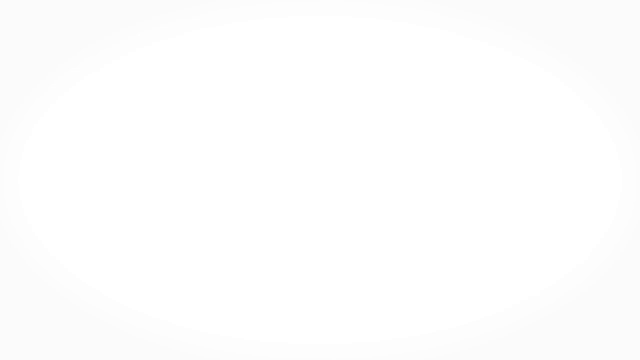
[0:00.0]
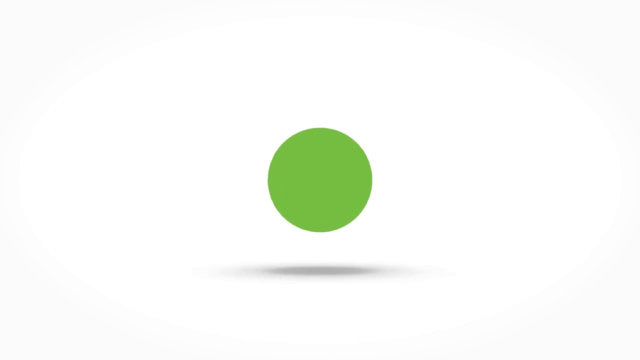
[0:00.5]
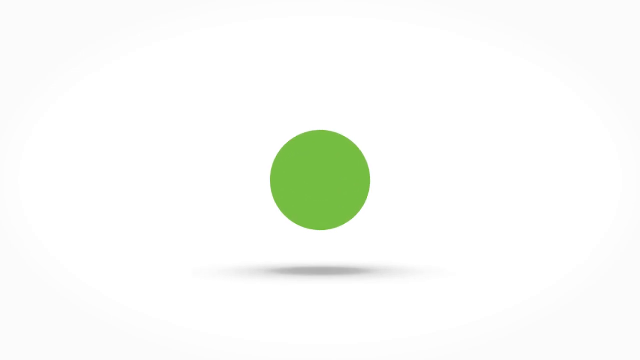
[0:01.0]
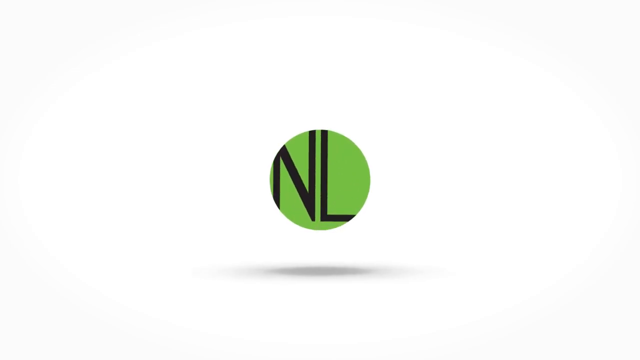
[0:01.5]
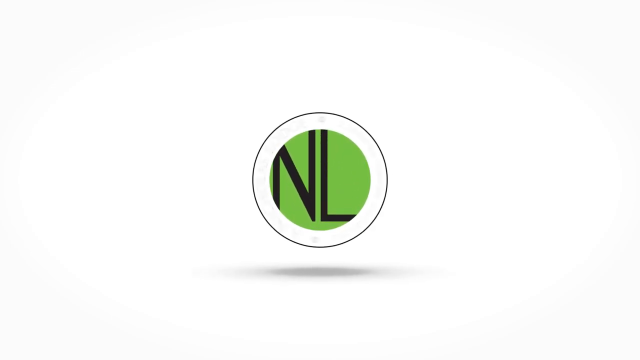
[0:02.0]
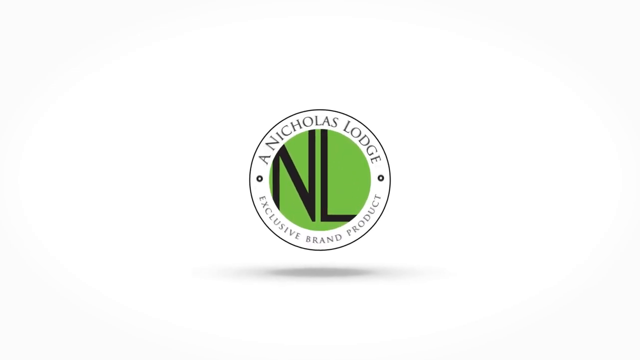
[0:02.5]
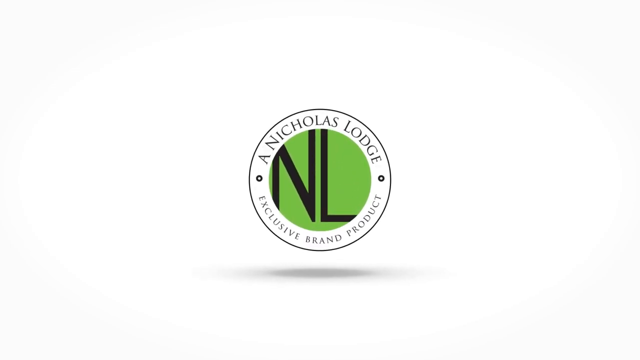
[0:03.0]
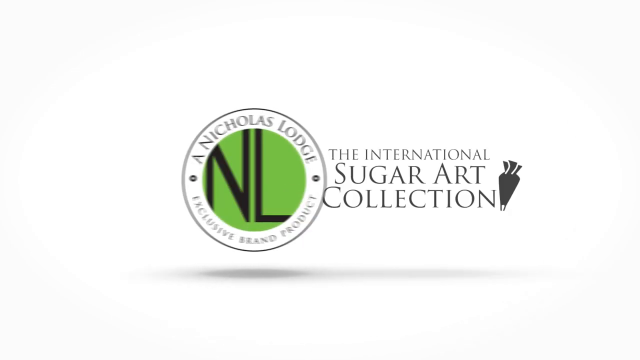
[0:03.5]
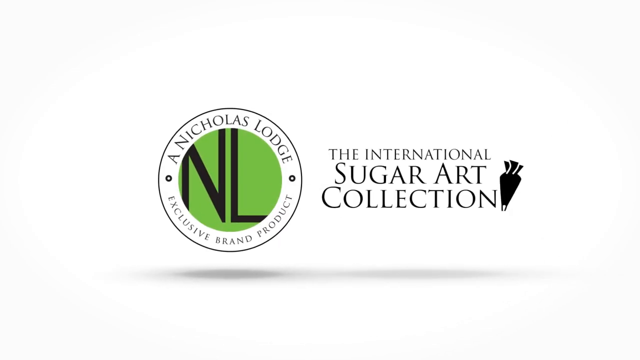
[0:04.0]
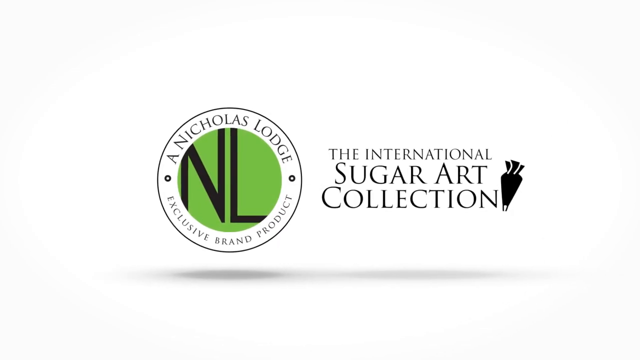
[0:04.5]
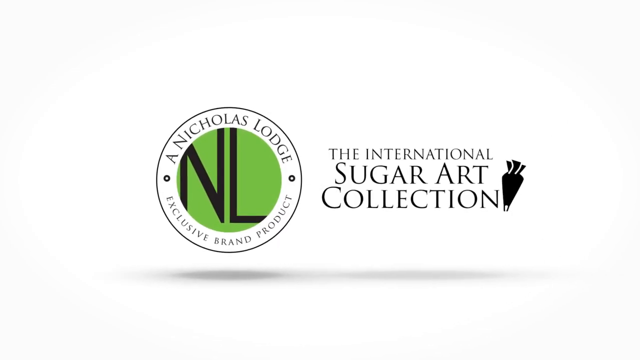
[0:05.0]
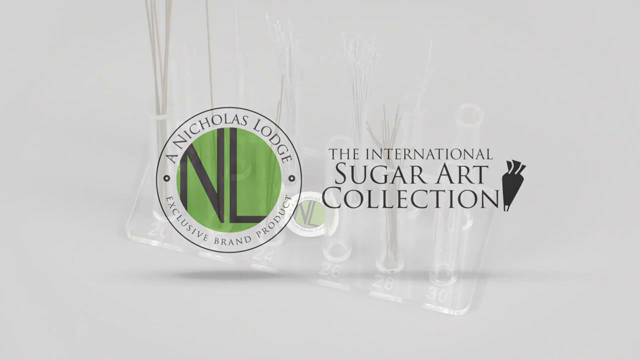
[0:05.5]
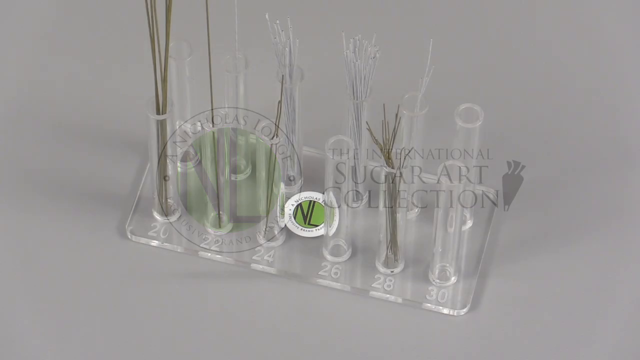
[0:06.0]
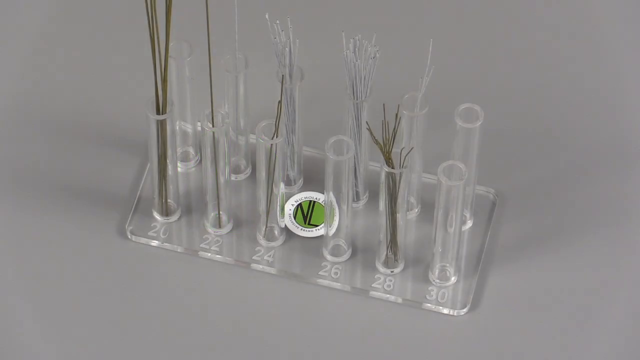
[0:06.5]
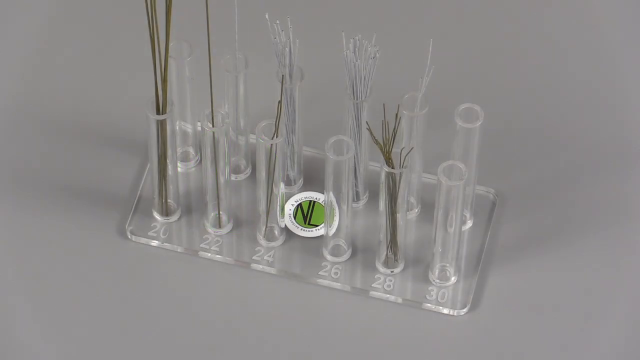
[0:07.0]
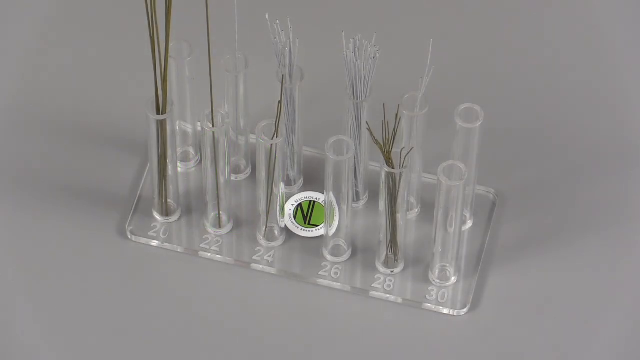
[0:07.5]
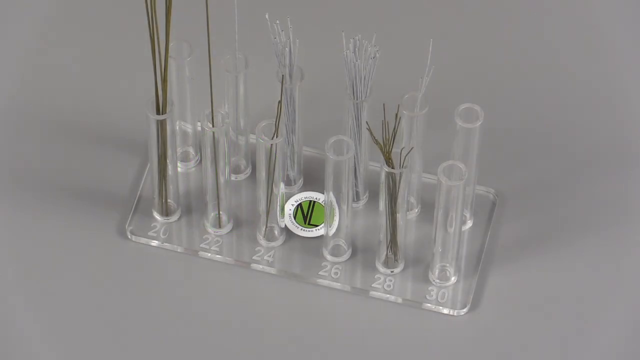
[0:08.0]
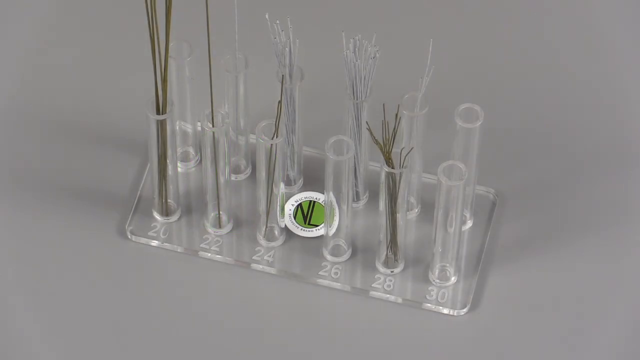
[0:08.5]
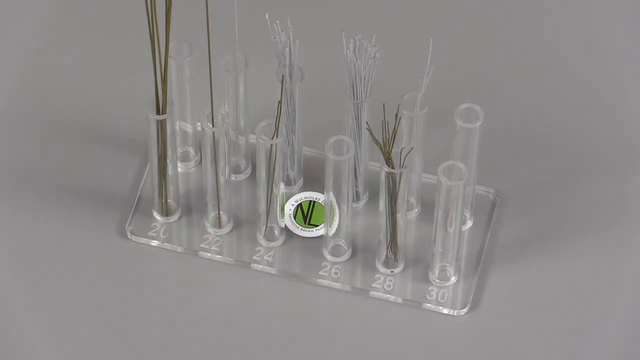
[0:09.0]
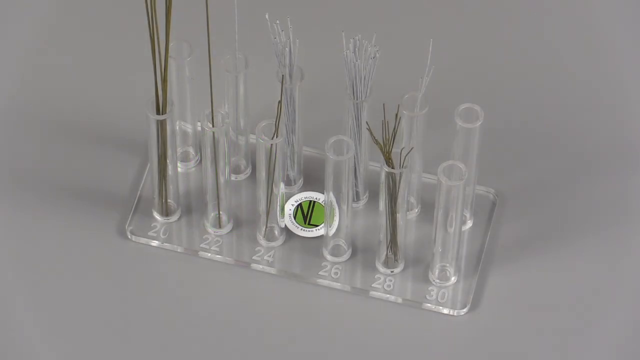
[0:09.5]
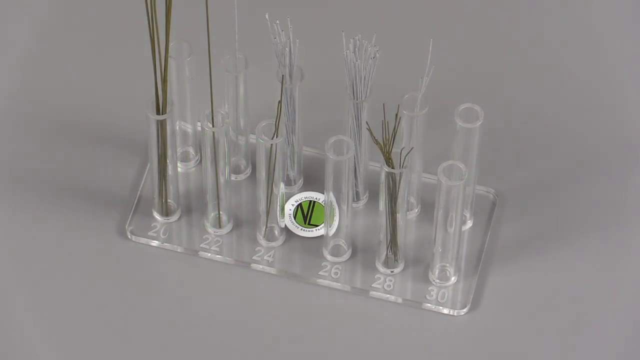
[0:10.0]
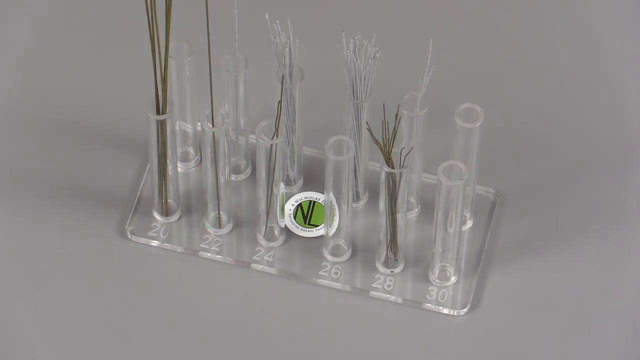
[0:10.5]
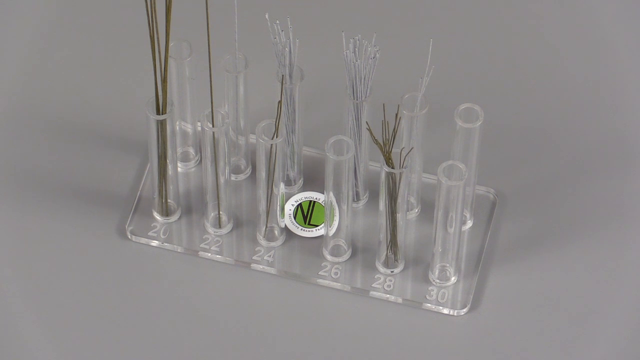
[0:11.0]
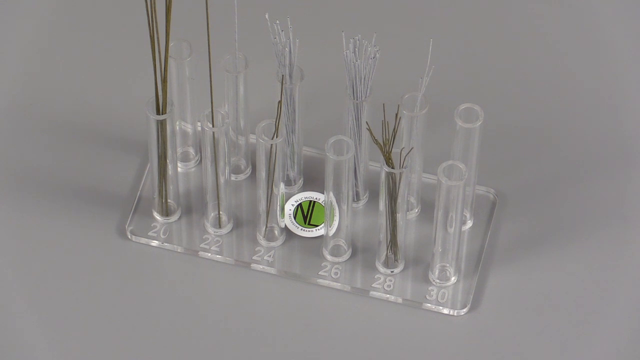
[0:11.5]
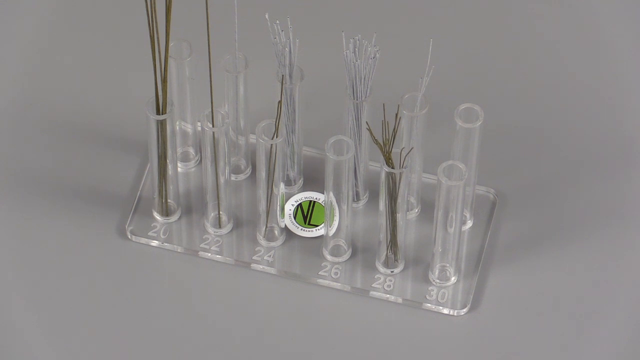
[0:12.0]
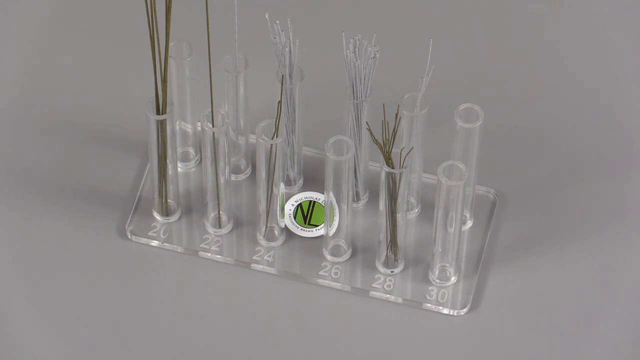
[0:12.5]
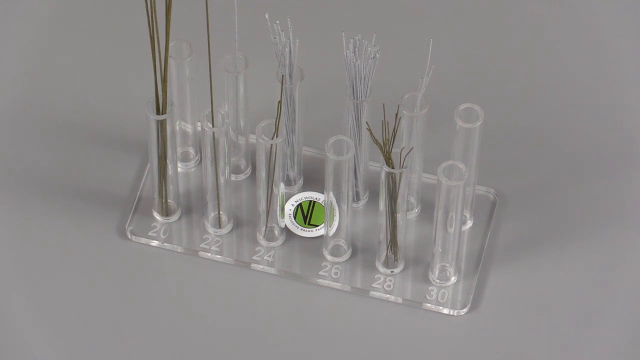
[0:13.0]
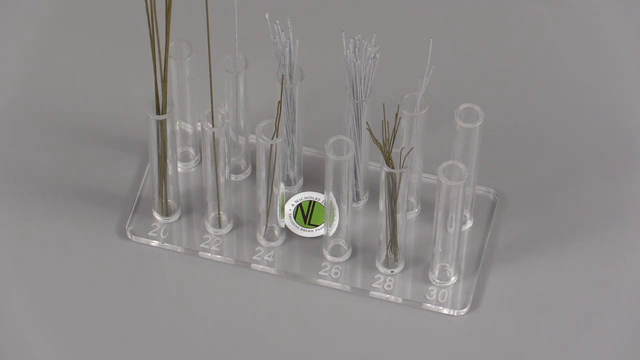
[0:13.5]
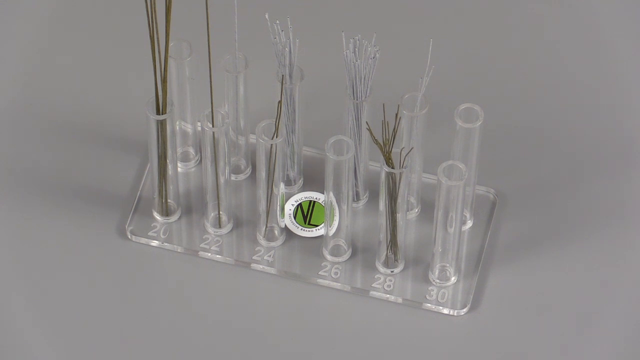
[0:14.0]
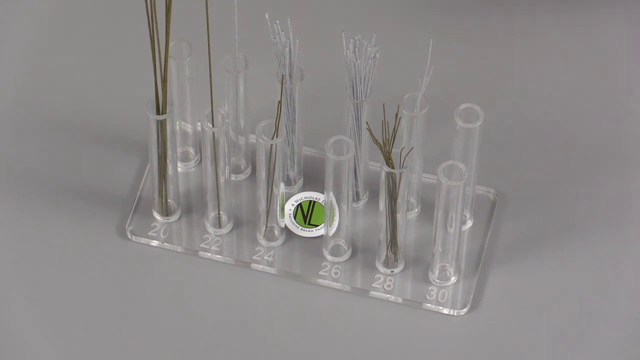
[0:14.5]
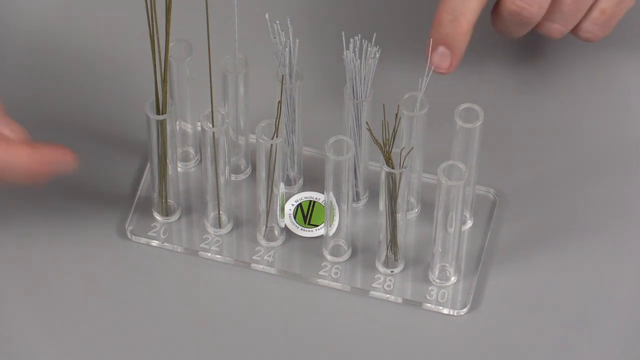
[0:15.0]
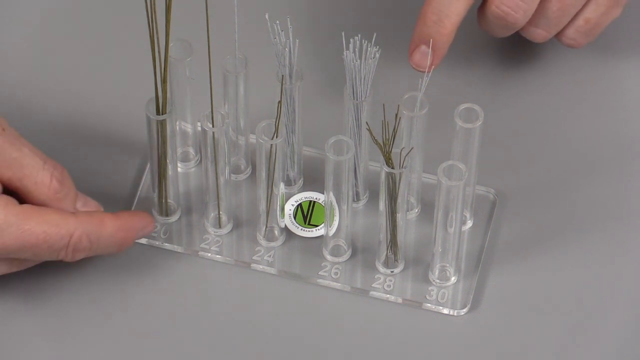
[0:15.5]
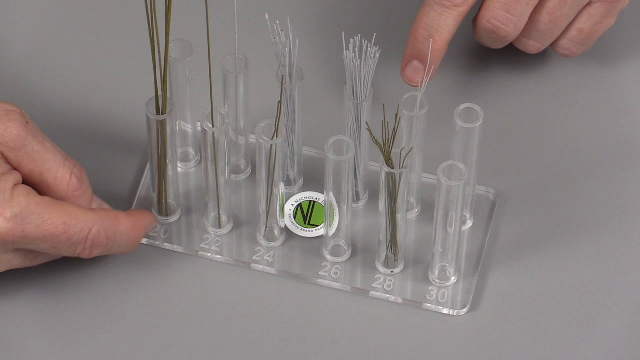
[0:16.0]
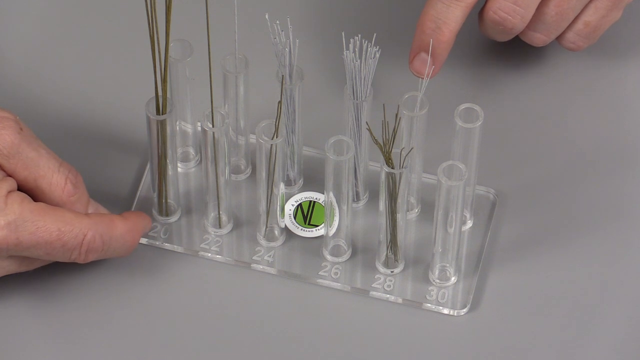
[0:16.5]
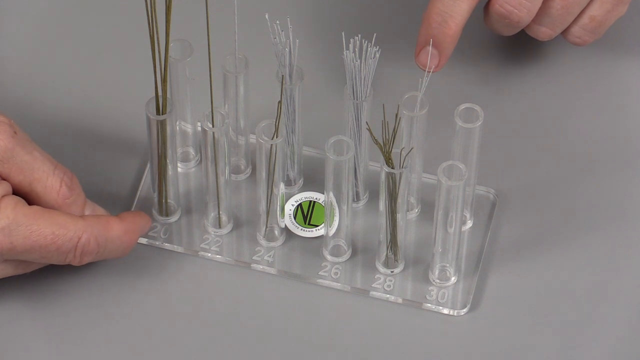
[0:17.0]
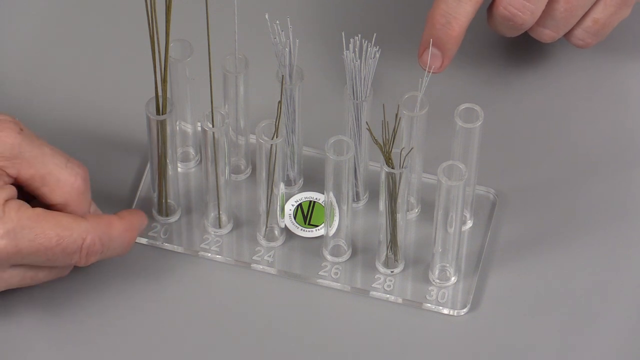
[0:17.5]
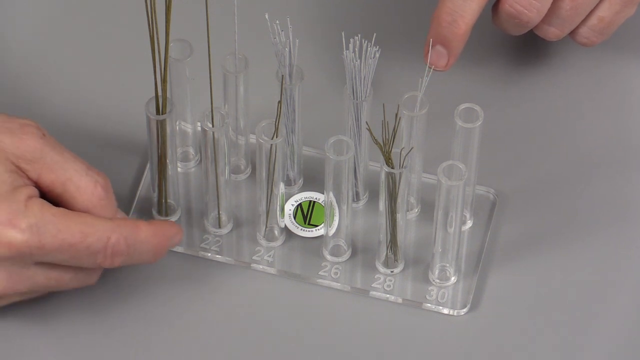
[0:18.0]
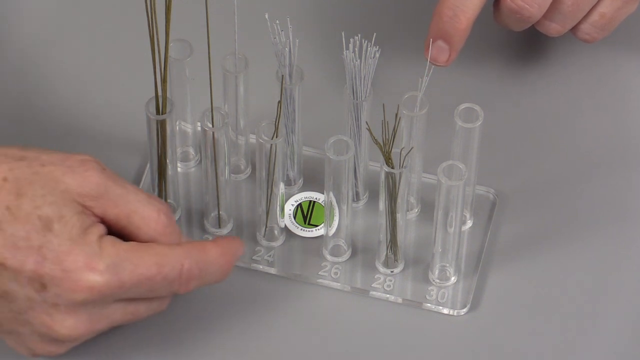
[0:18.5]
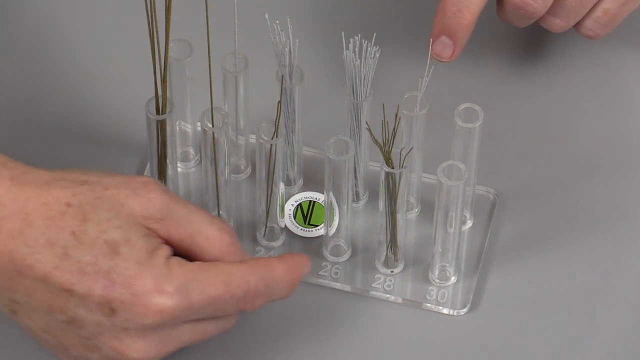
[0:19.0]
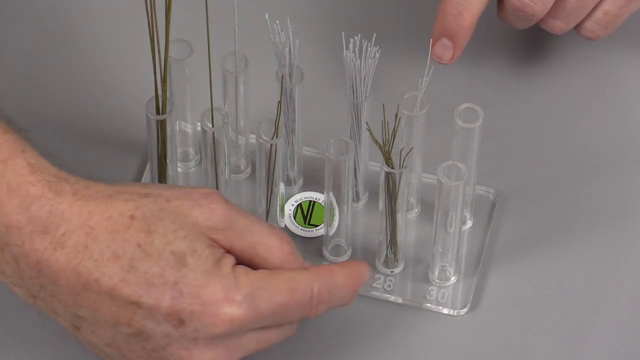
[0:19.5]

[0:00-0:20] An opening sequence shows what could be the logo of a company called Nicholas Lodge, with an abbreviation in black that stands for Nicholas Lodge. Text reads "the International Sugar Art Collection." A batch of 12 vials appears; they seem to be clear and rest on a gray surface. Inside the vials is some kind of product that seems to be plants. The hands of a white person seem to be giving instruction, touching the vials to demonstrate what they are doing.